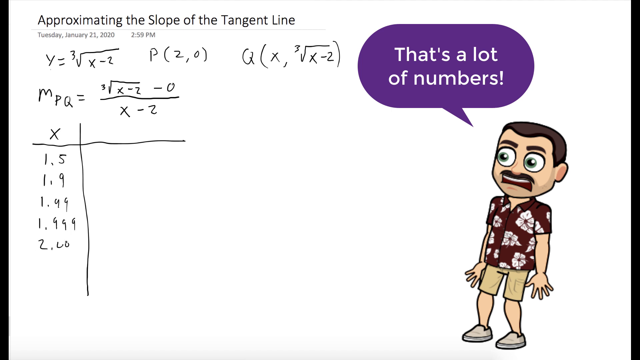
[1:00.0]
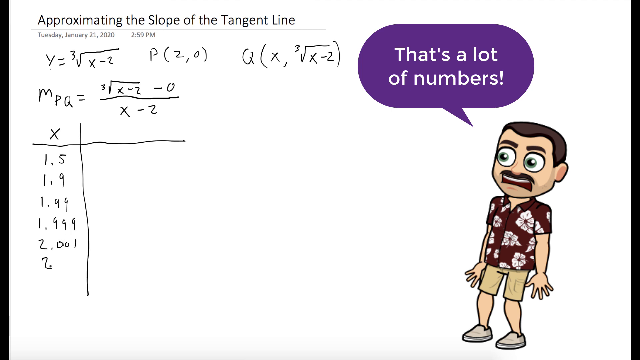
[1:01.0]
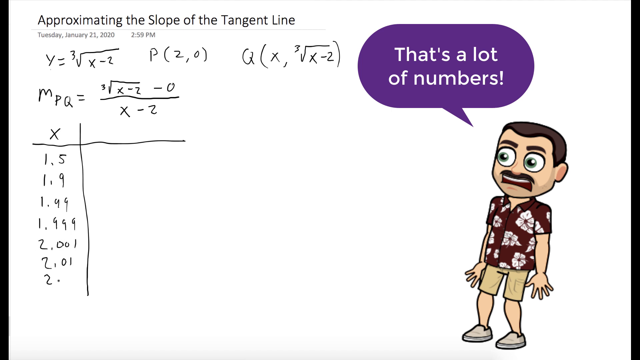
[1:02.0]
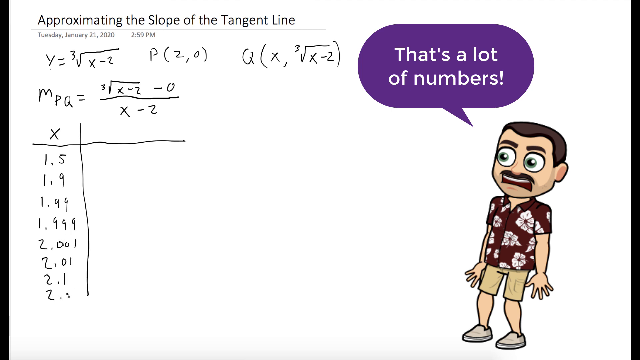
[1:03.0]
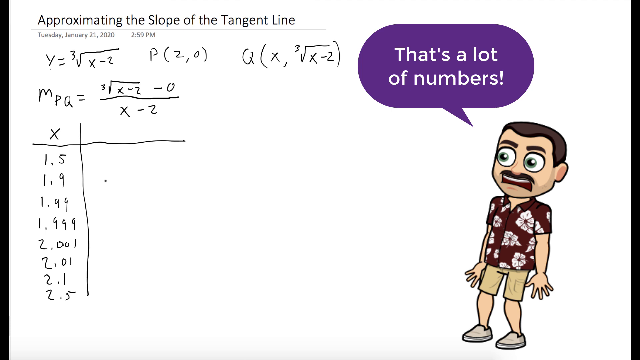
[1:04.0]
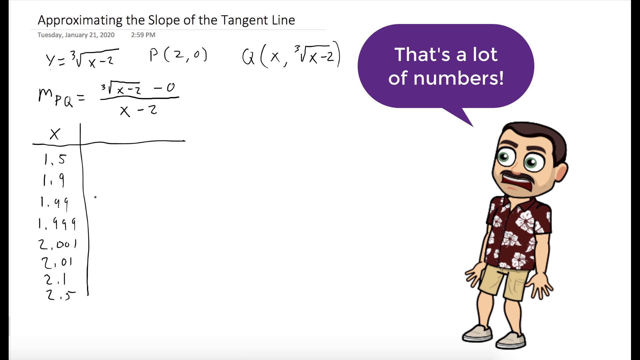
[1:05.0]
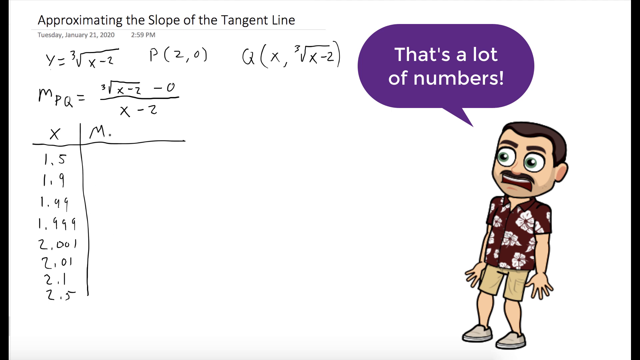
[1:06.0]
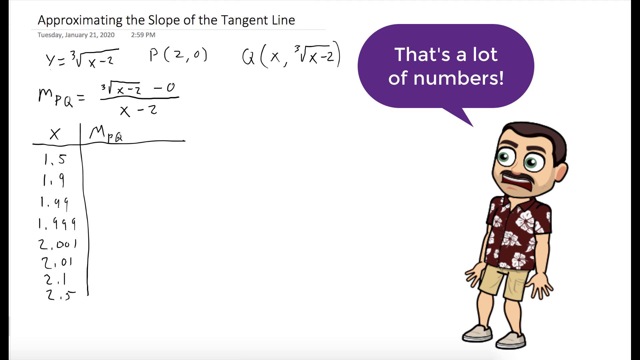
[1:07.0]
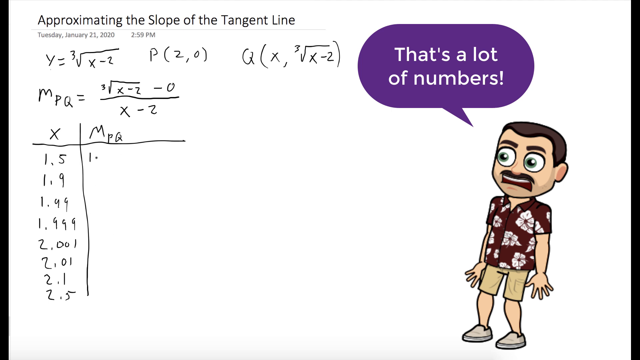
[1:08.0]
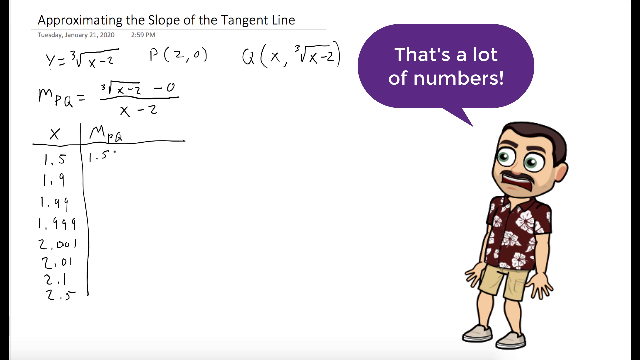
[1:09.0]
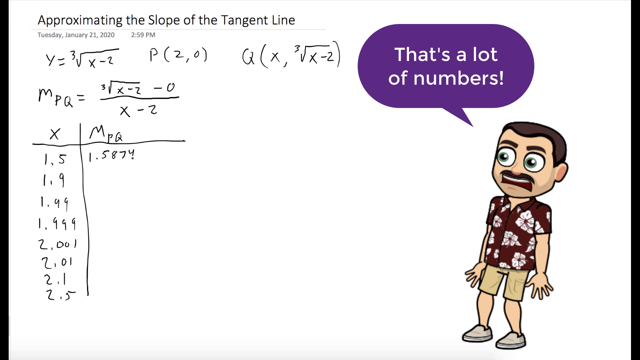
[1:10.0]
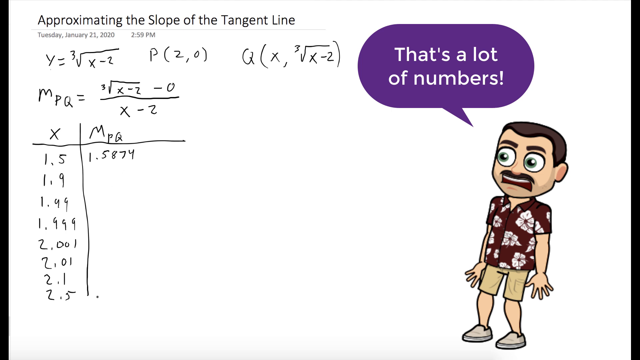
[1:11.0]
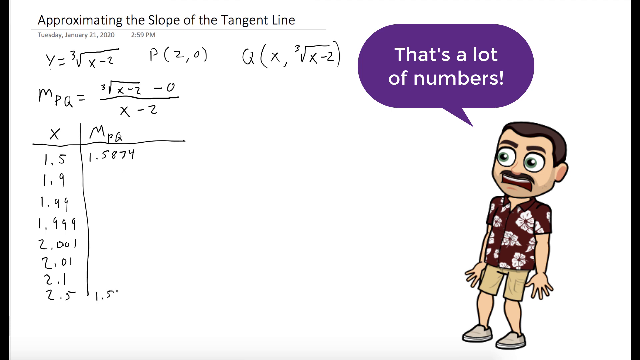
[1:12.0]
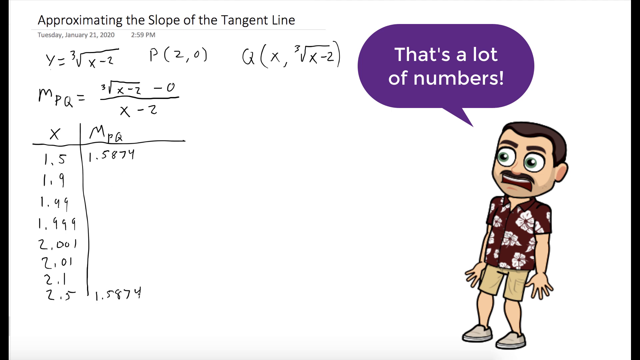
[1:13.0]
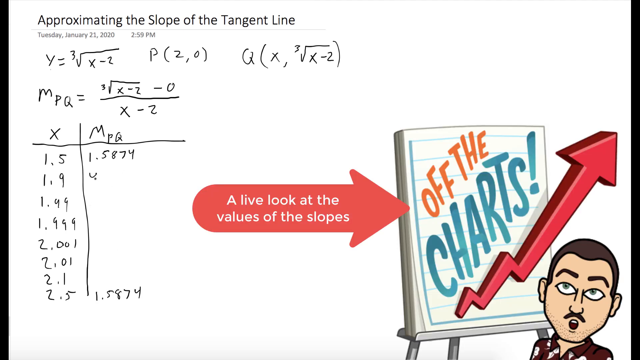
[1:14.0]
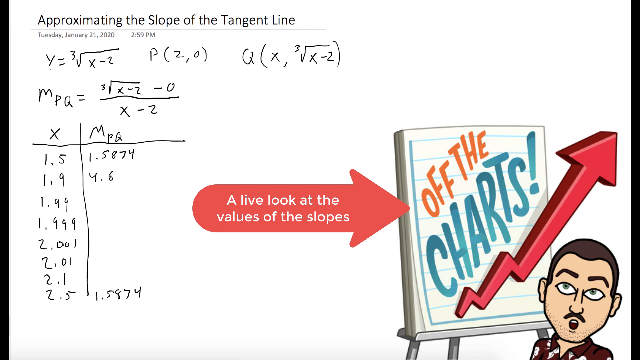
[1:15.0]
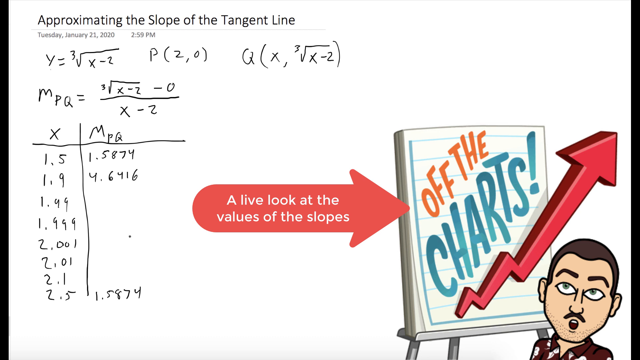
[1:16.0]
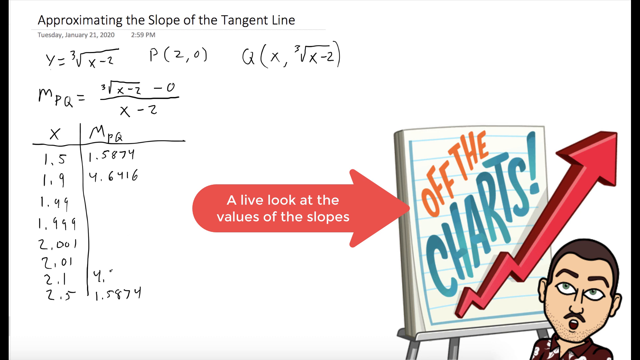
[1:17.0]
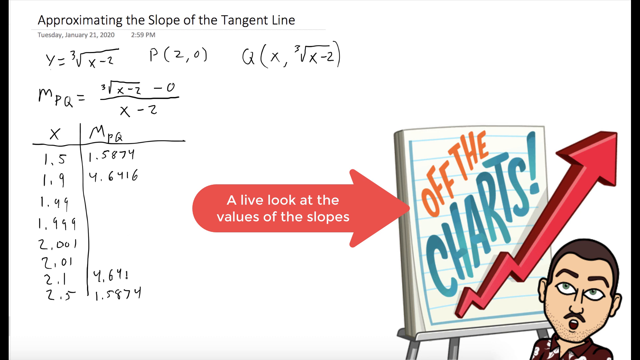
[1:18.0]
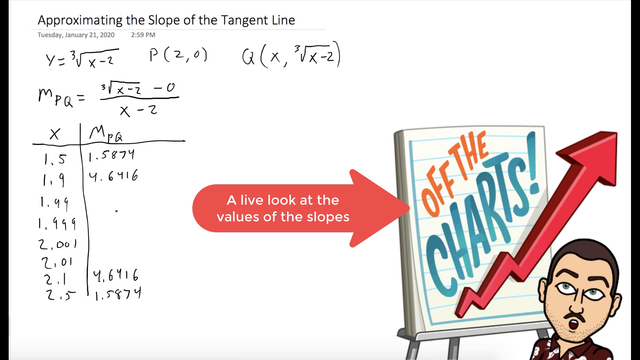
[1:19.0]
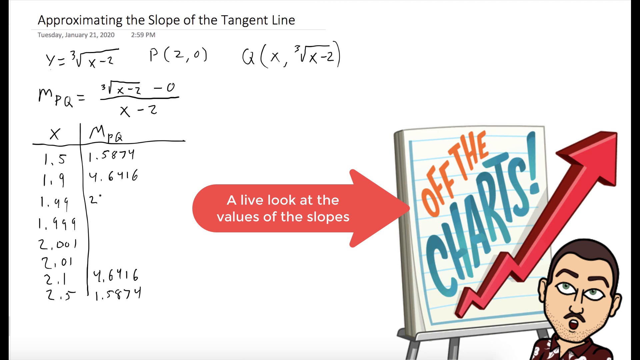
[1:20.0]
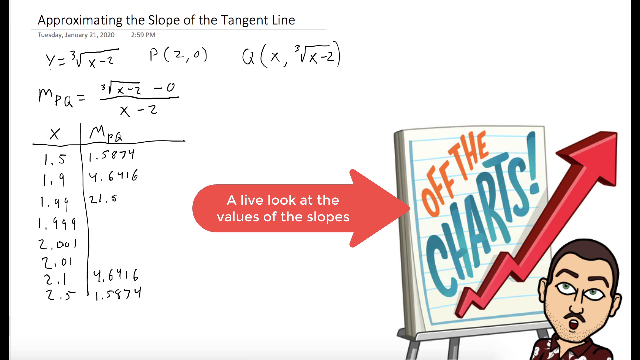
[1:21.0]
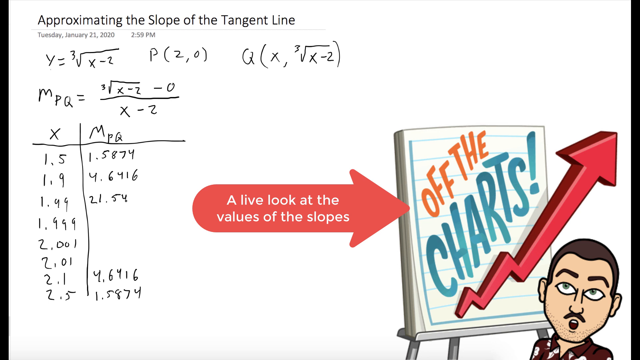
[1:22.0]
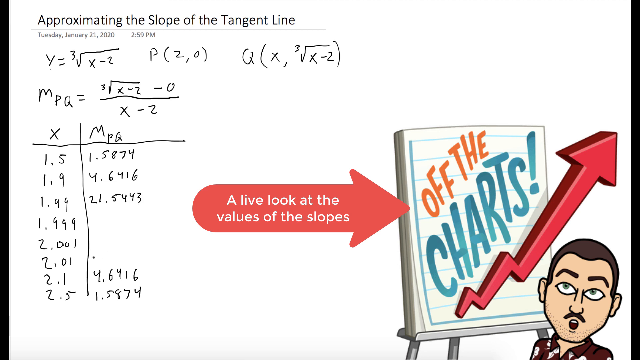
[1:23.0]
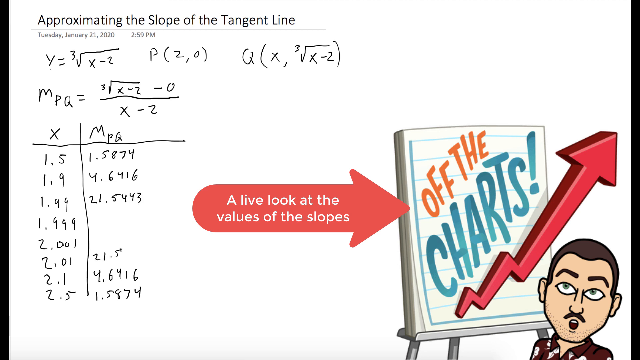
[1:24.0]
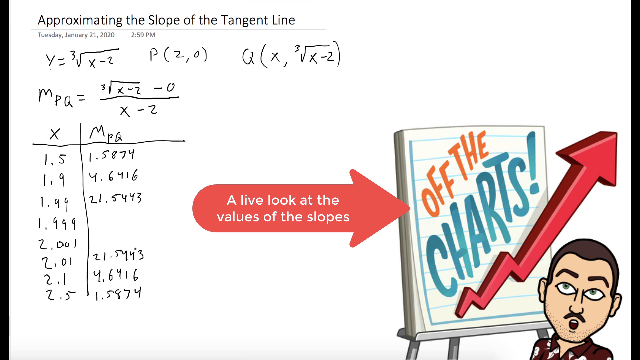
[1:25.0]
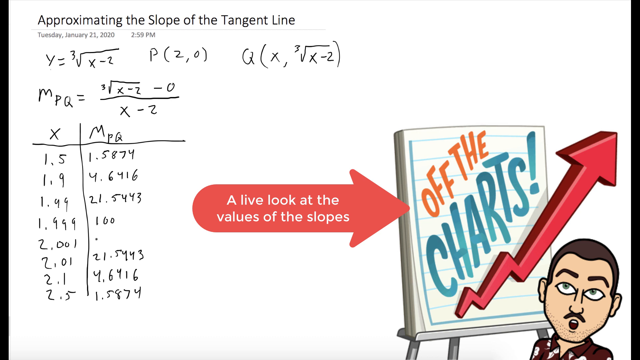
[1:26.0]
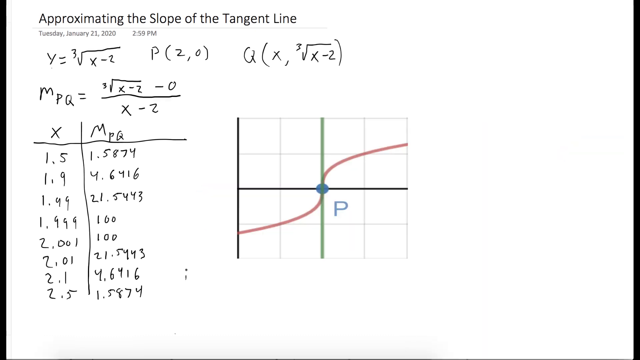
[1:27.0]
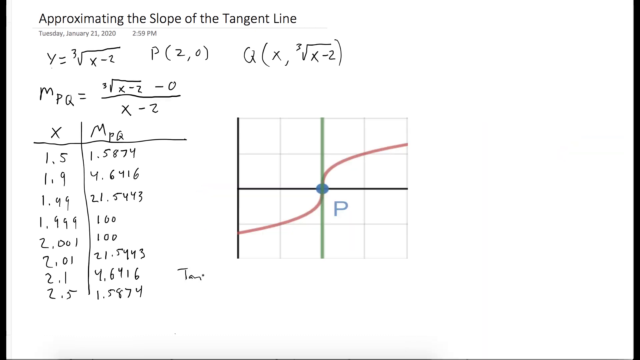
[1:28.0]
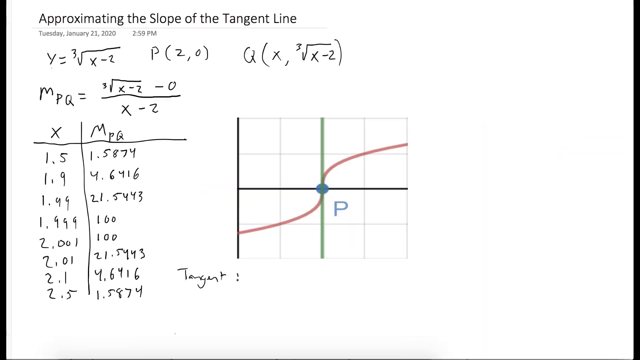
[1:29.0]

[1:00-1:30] The whiteboard has the same type of writing and equation on its left side. A long line with a line going across forms a sideways cross like a T, with x in the first column. Under the x, in a linear line, are 1.5, 1.9, 1.99, 1.999, 2.001, 2.01, 2.1 and 2.5. The next column has what looks like numbers, and there are a lot of numbers on the right. The cartoon character has both hands on its sides with fingers open, wide eyes and a mouth in a straight line. The right column of numbers is headed m with a small PQ, with the value 1.5874. A flash on the right changes the picture to what looks like a piece of paper with lines on it, with words going from the left toward the top at an angle off the chart. An arrow goes up, and there are two distinctive curves that are very straight and sharp. A little man's face is in the lower right corner. The cursor continues writing a lot of numbers, and in the second column of the box beside this a graph comes up.